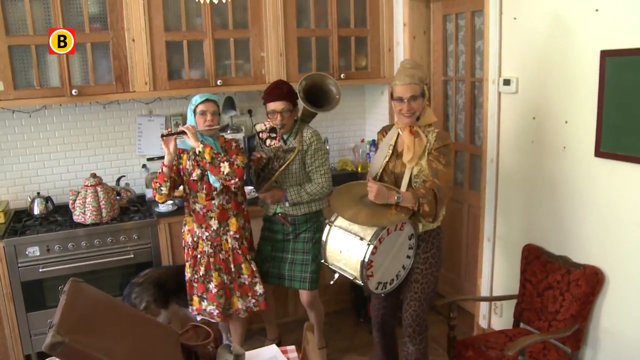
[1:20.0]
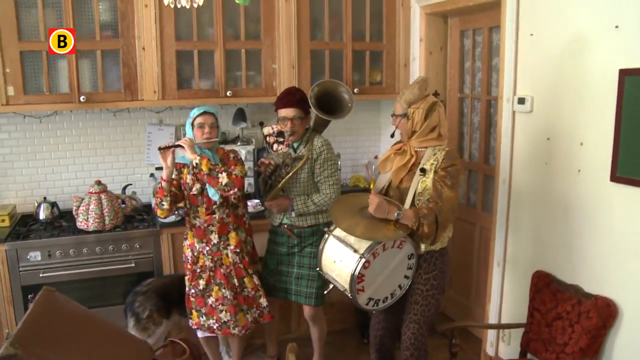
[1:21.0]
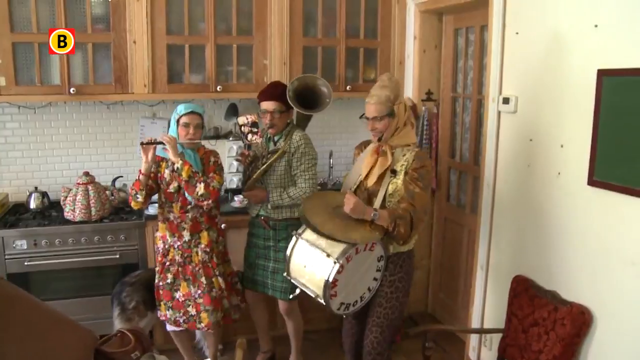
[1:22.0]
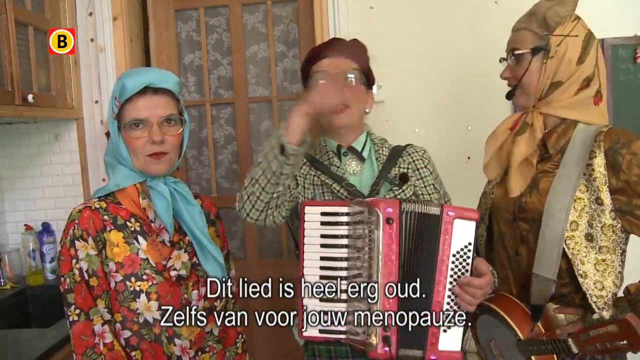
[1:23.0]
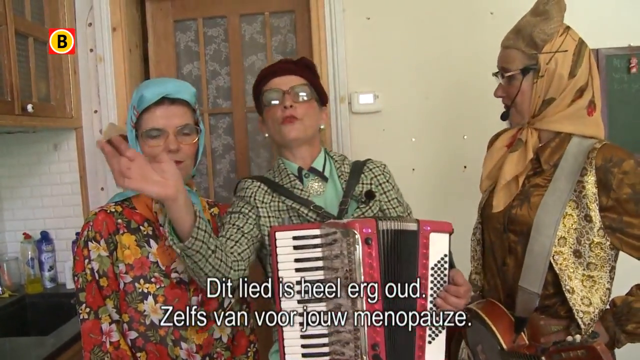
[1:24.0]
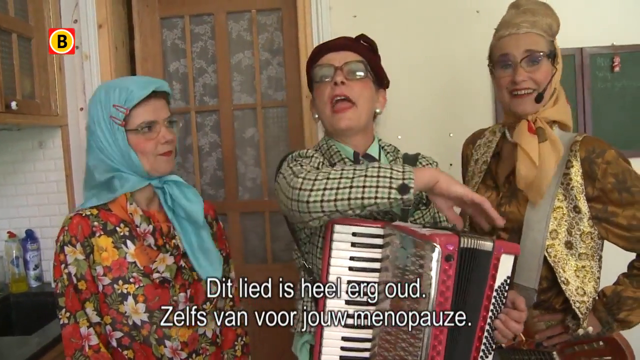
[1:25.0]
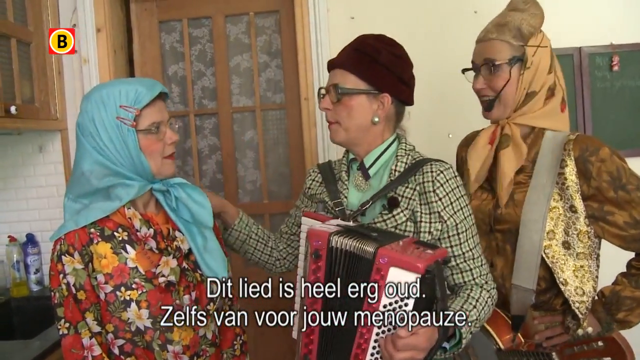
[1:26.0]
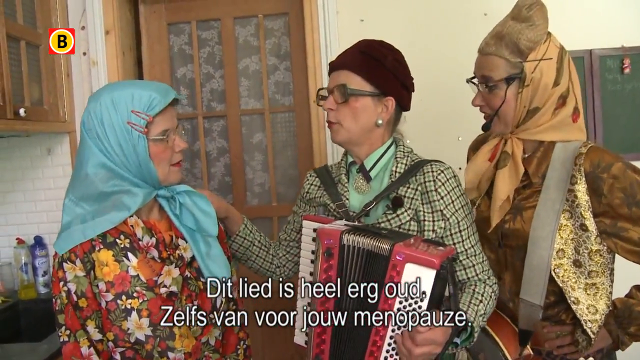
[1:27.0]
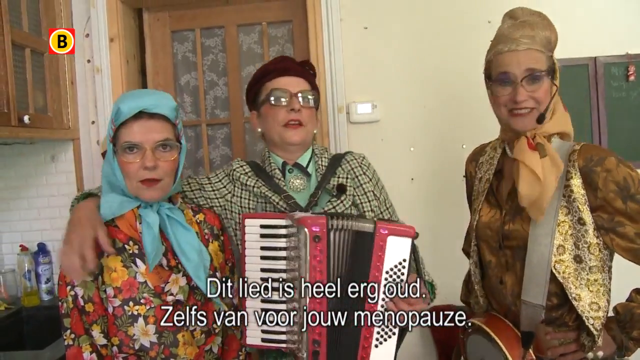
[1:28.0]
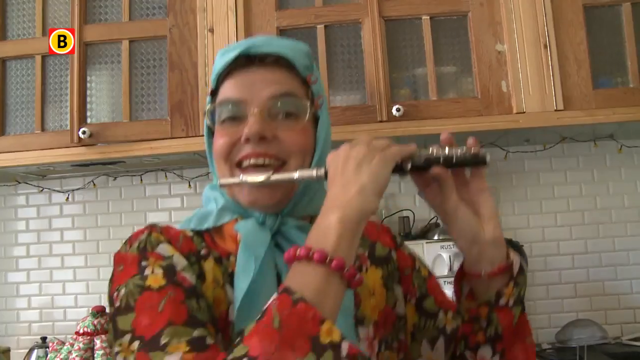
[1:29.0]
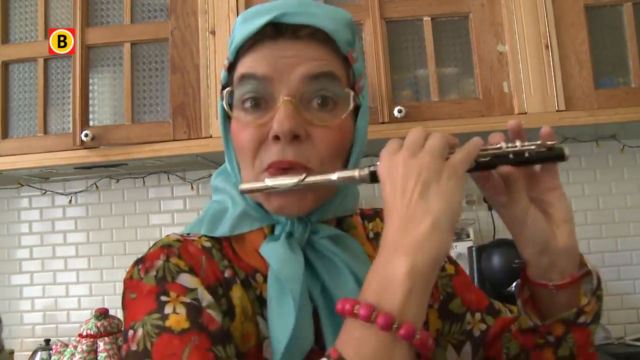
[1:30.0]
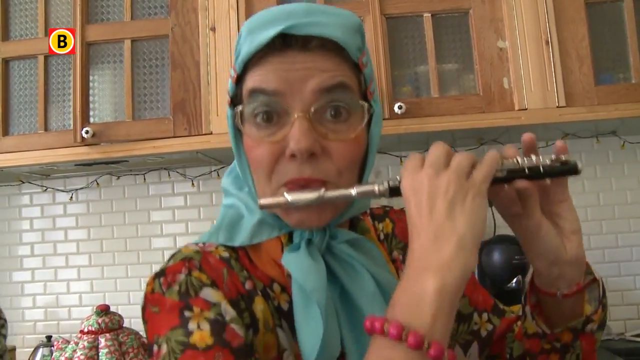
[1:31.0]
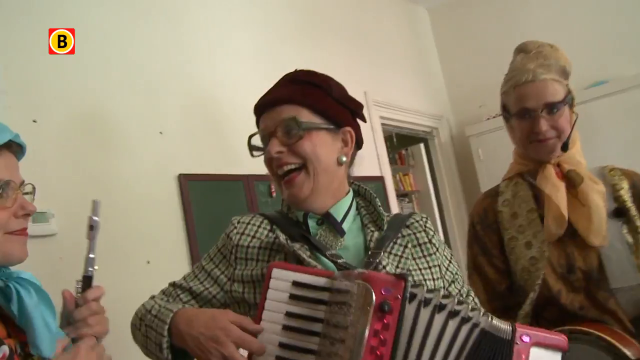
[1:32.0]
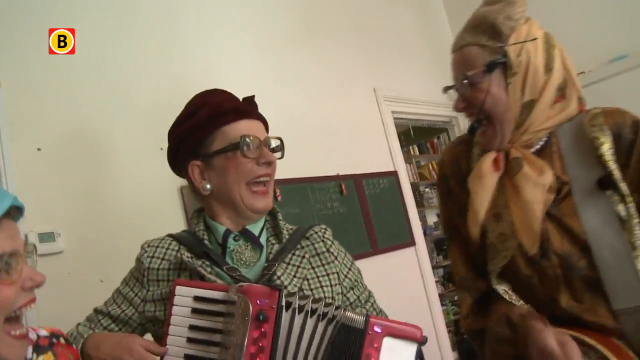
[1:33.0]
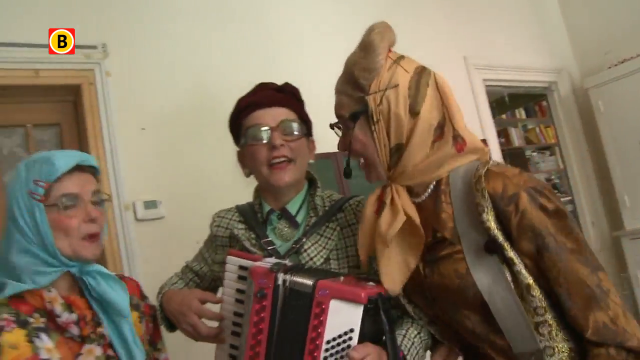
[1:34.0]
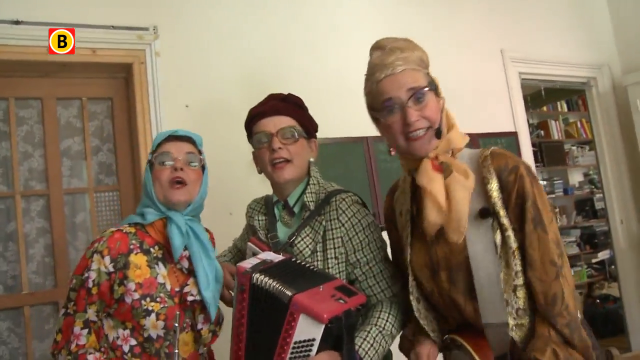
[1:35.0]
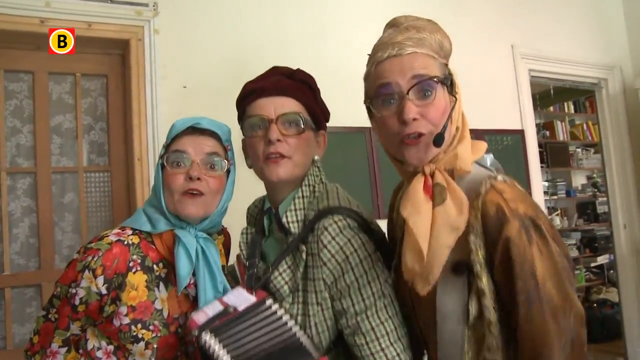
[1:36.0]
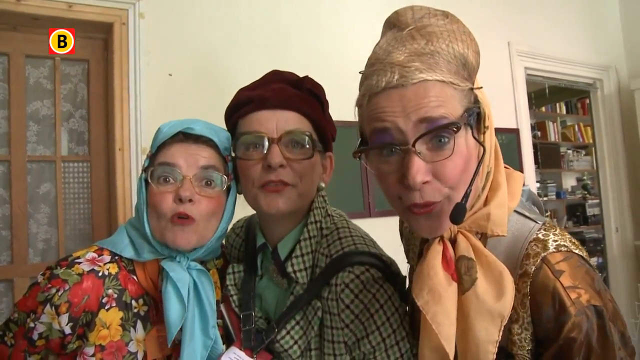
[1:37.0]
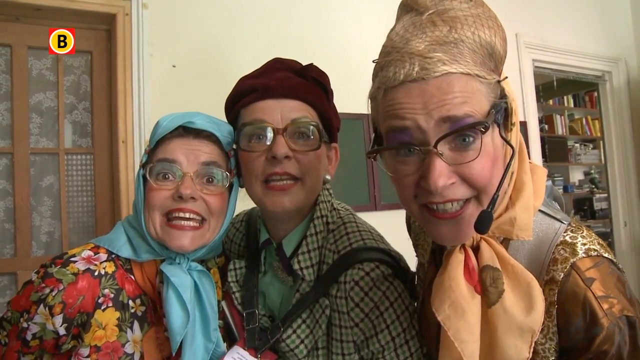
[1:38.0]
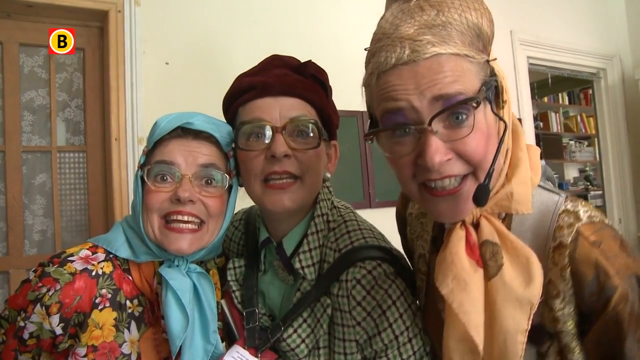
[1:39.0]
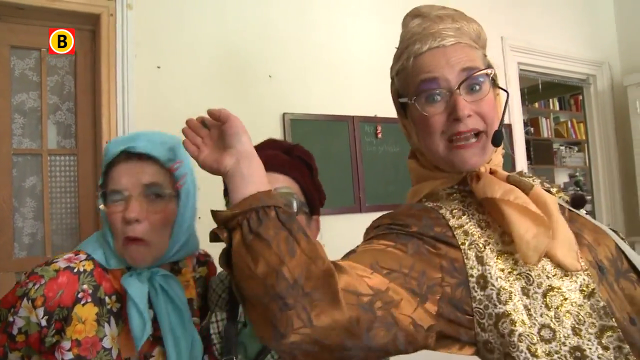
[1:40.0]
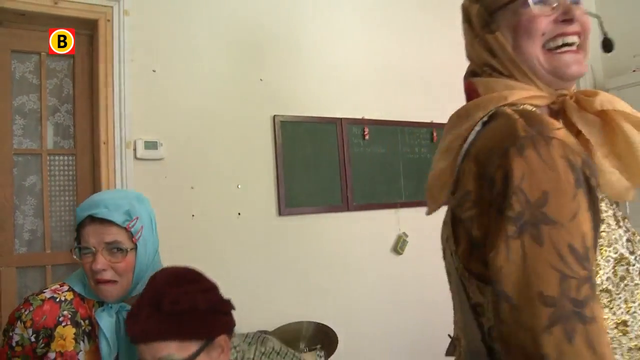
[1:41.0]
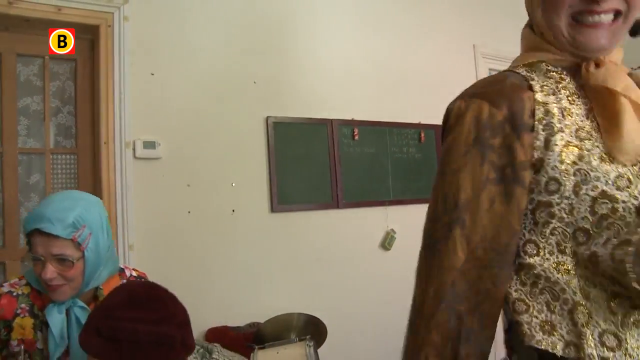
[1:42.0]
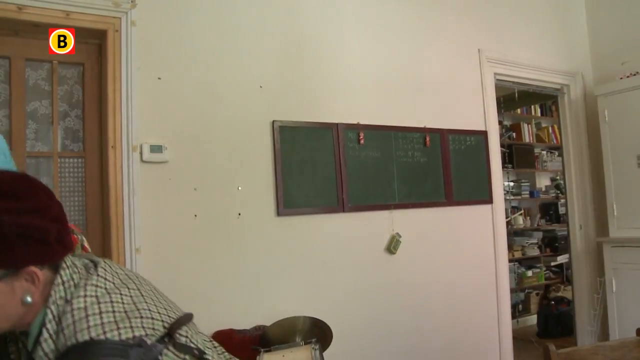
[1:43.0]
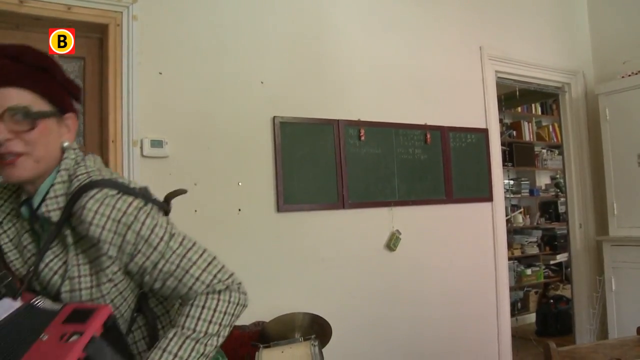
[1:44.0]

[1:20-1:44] Three women play instruments in a home kitchen. The one on the left wears a red, yellow, and green floral dress and a blue headscarf, and plays a metal flute. The woman in the center wears a blue plaid miniskirt, a blue and green plaid jacket, and a red bonnet, and plays a mini trombone. The woman on the far right wears leopard skin tights with a gold silk blouse and a gold embroidered vest on top, plus a gold silk headscarf, and plays a mini bass drum with large regular-size cymbals on top. The video cuts to them talking to the camera again, no longer playing. The woman in the plaid green jacket waves her right hand back and forth, then puts her right arm around the shoulder of the woman to her left. It cuts to a close-up of the woman in the blue headscarf playing her mini metal flute, then to all three women playing in the kitchen once again. They talk to the camera and seem to sign off, then smile, laugh, and walk off camera.